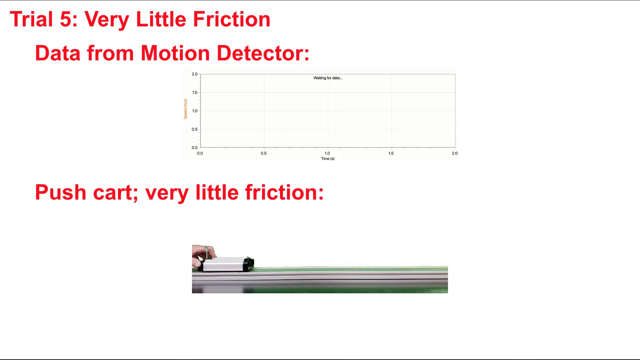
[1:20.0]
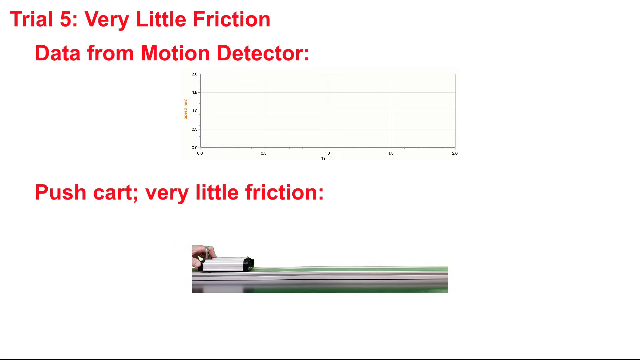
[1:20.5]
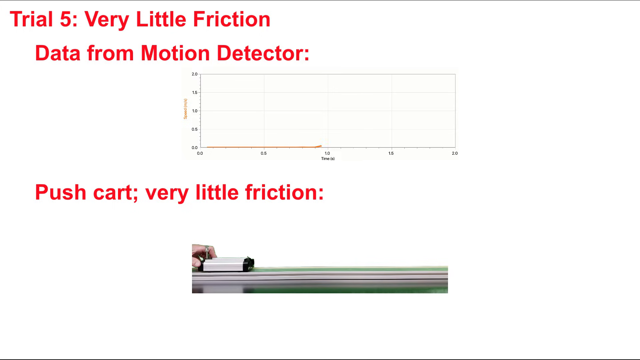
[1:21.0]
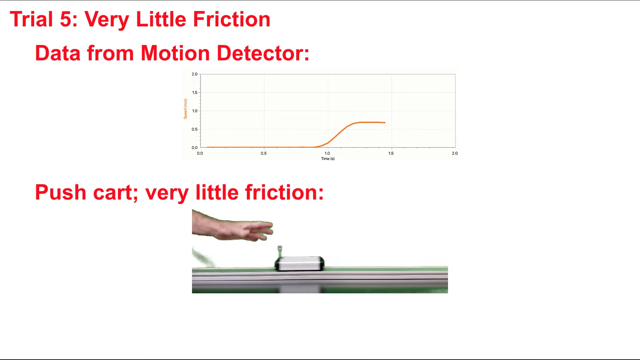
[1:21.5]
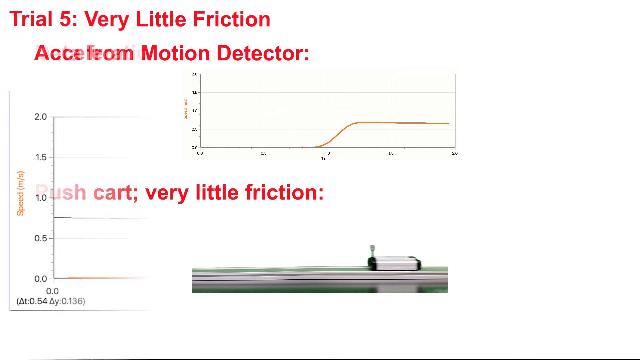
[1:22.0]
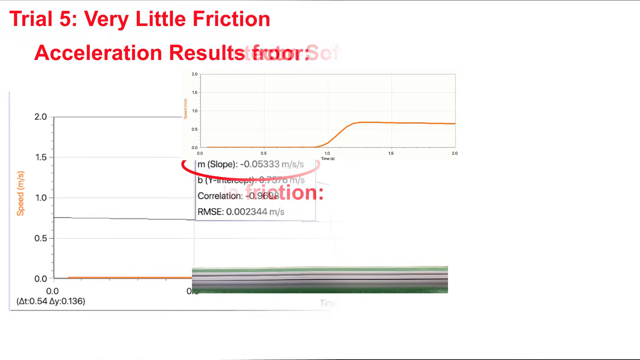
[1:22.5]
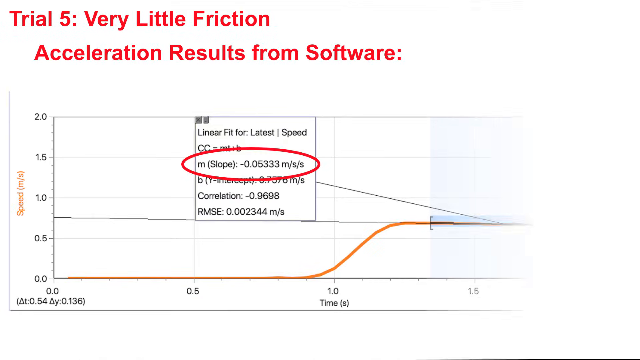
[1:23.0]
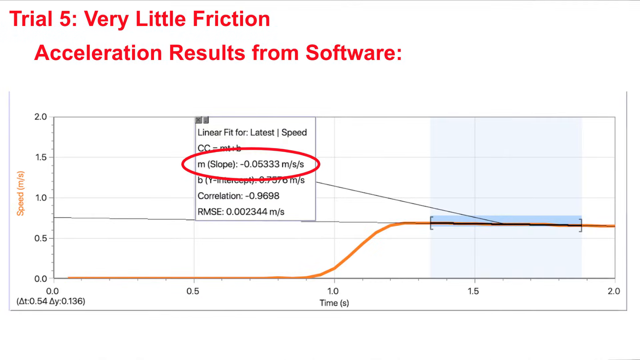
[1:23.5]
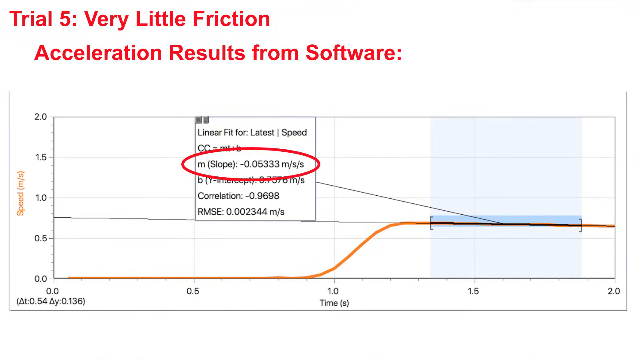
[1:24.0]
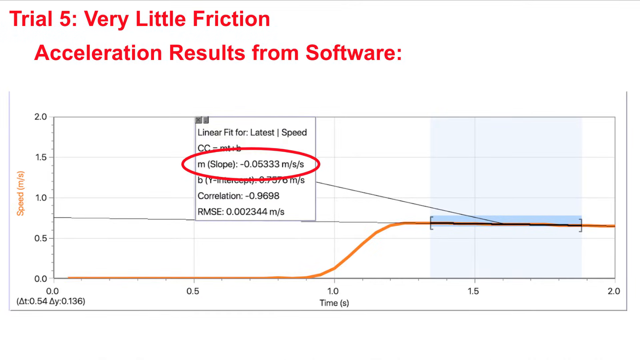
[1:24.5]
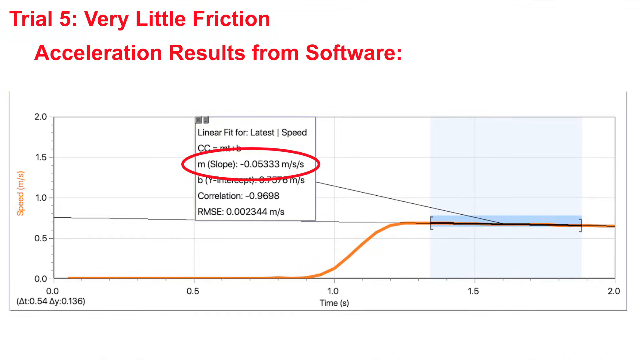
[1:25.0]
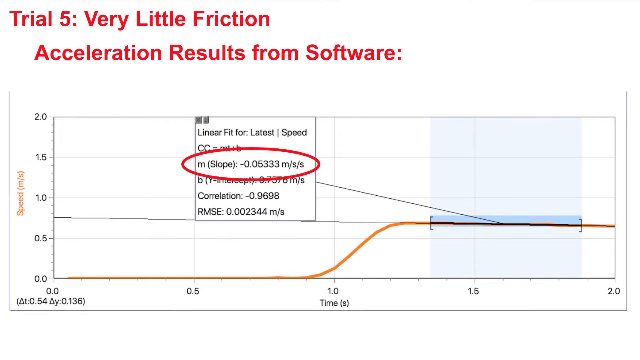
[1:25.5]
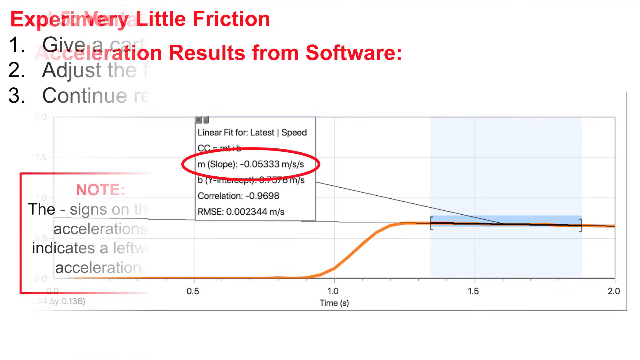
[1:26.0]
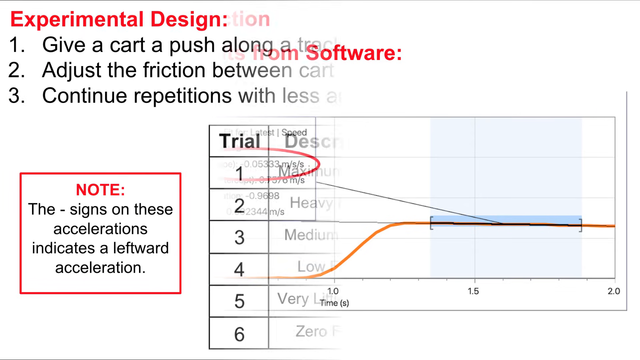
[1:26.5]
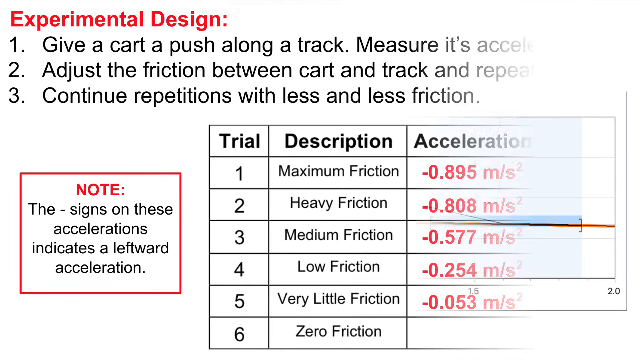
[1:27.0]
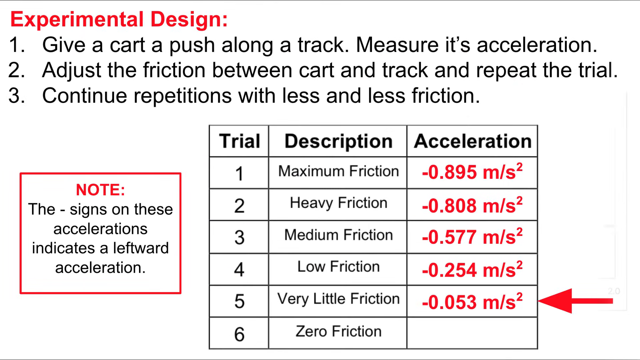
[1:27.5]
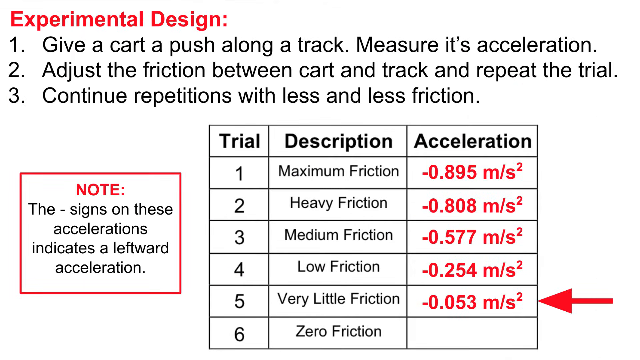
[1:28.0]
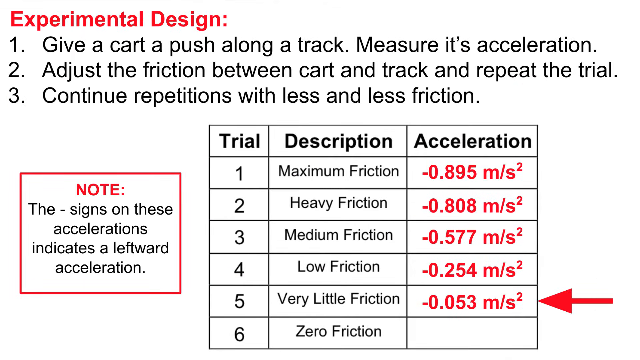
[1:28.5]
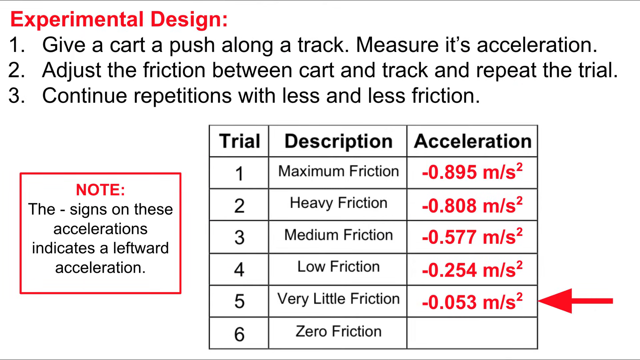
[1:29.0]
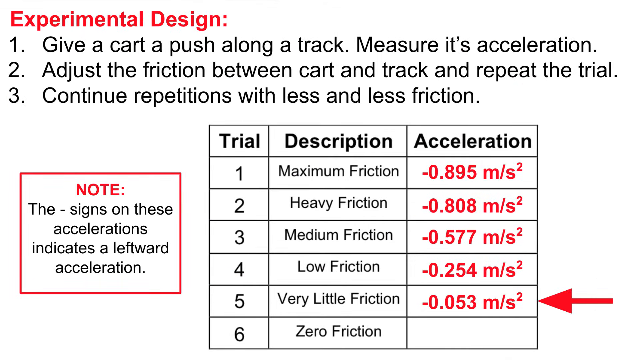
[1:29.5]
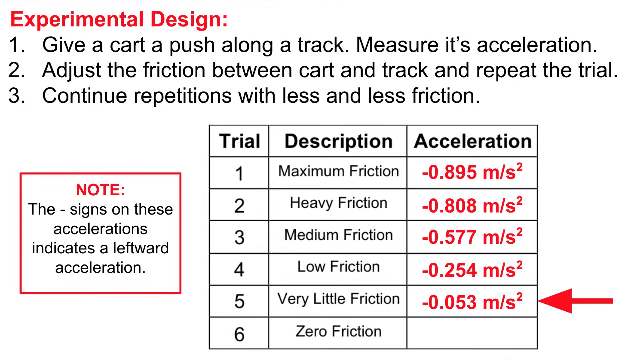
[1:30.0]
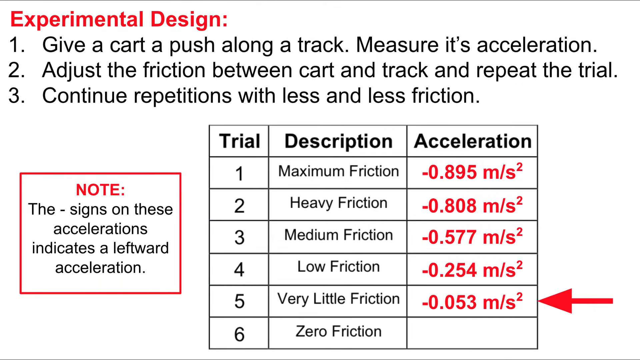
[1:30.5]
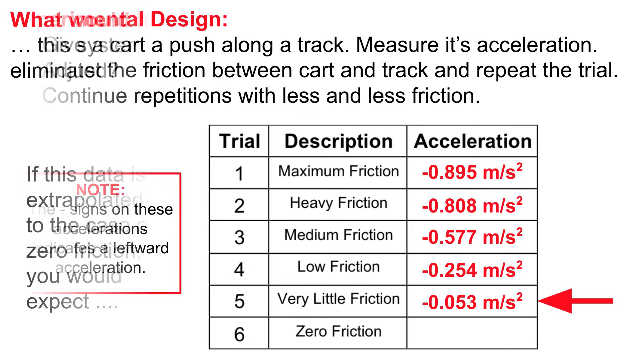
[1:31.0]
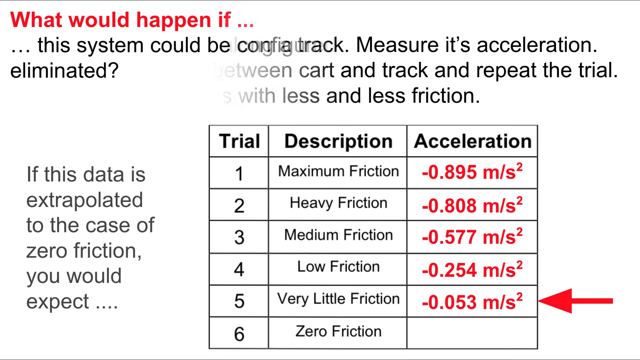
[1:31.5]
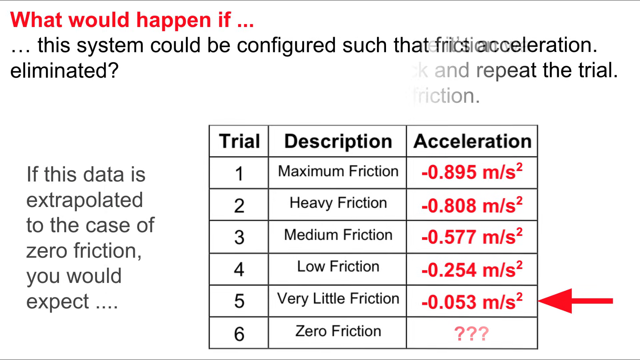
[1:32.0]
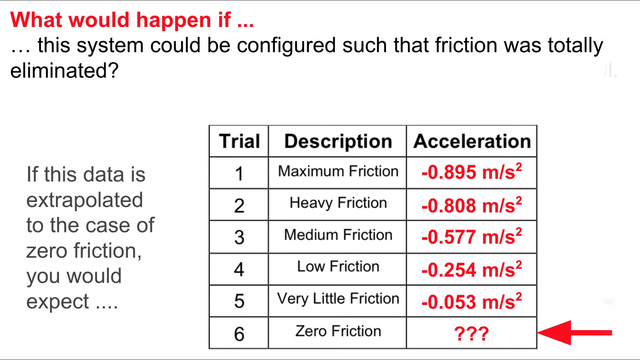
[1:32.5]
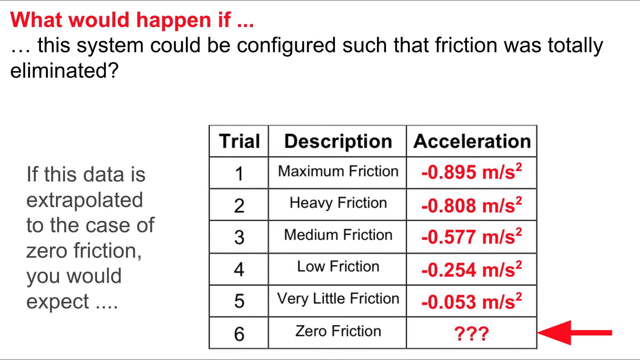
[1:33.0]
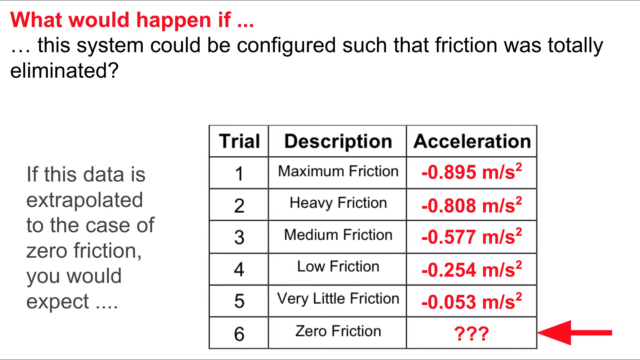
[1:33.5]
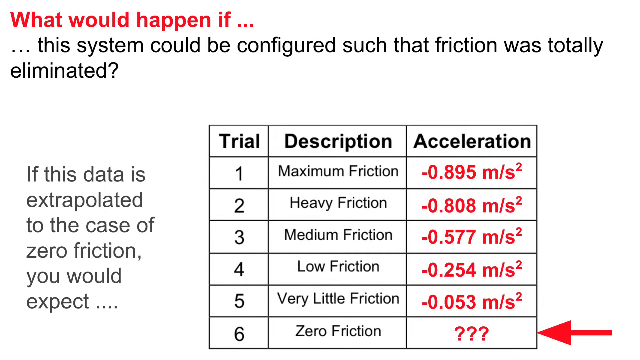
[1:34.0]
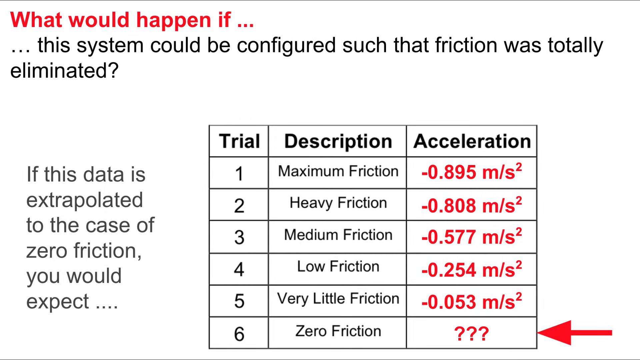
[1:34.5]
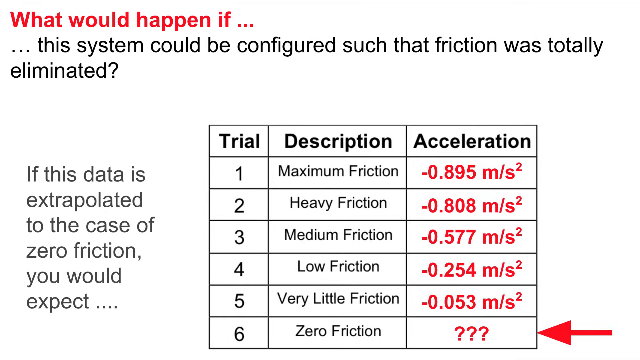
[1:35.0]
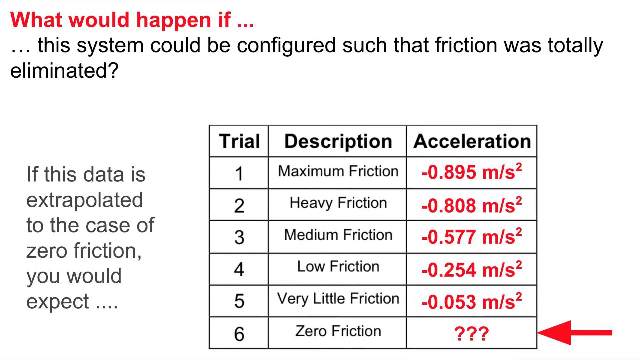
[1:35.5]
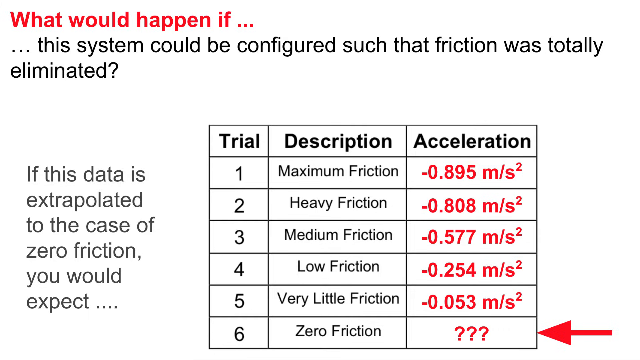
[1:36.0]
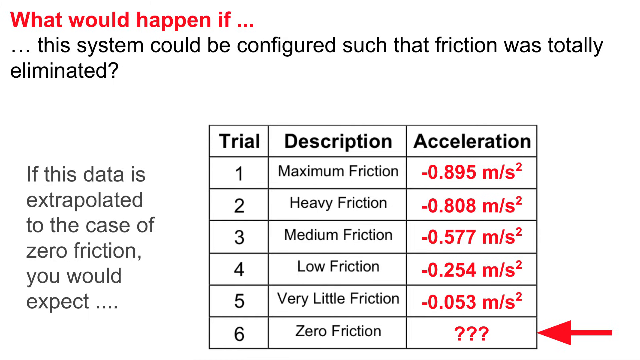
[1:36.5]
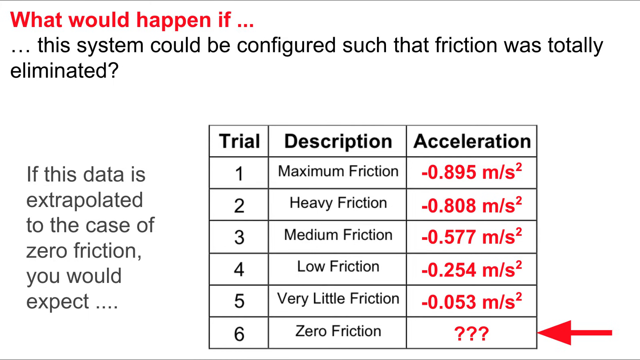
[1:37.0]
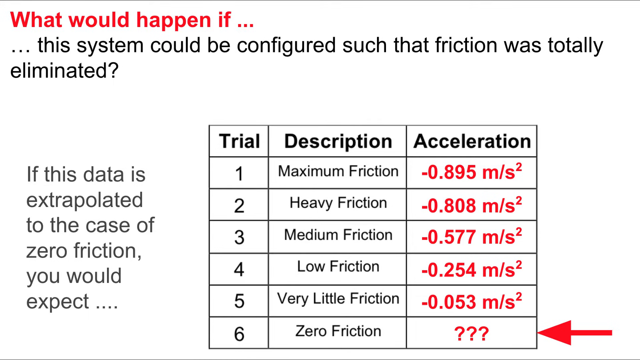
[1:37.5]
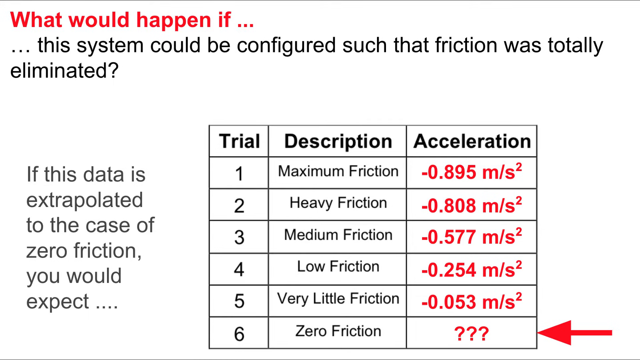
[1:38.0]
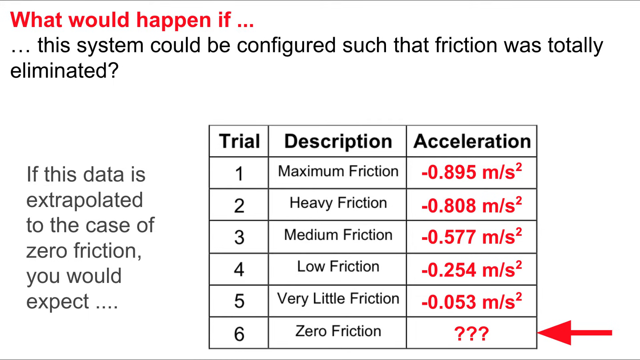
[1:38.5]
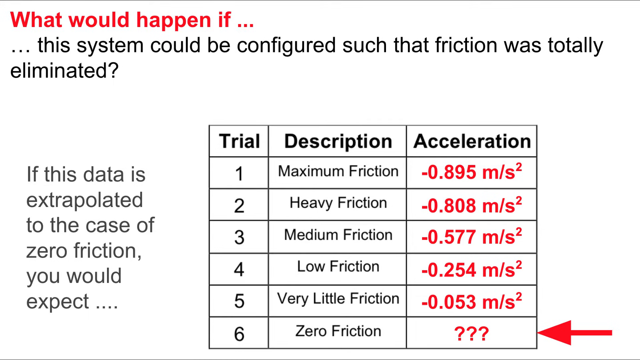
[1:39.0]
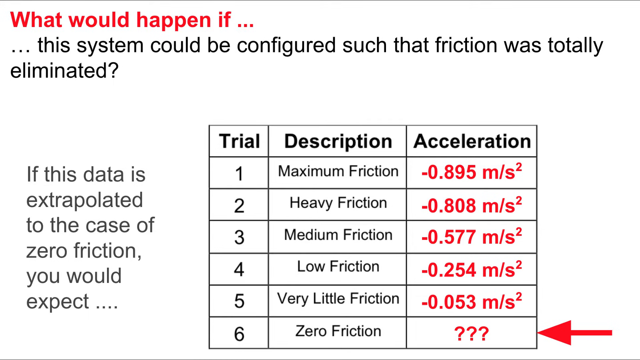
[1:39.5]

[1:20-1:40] Trial 5, described as very little friction, is shown. Text on the left-hand side of the screen asks about extrapolating the data to the case of zero friction and what would happen if the system "could be configured so that the friction was totally eliminated." The acceleration obtained for trial 5 is minus 0.053 meters per second squared. As before, a piece of equipment is on a flat surface, a force is applied, and the force is described in a graph shown above.